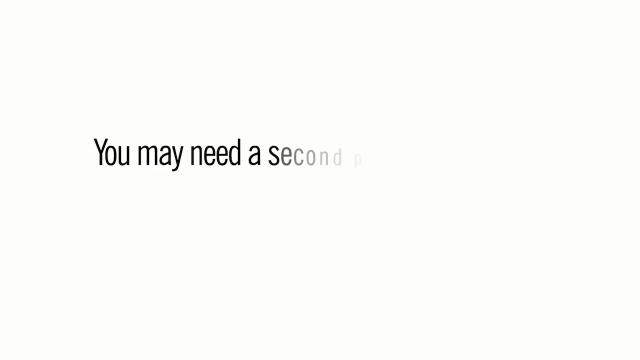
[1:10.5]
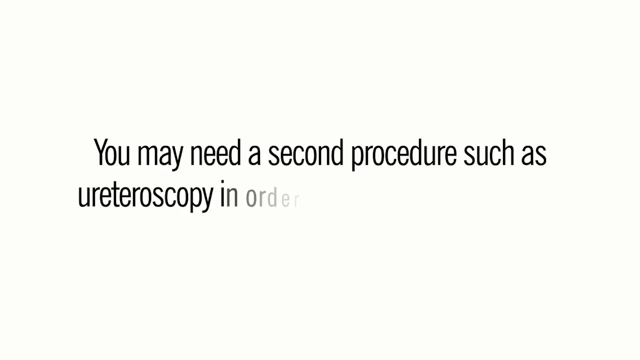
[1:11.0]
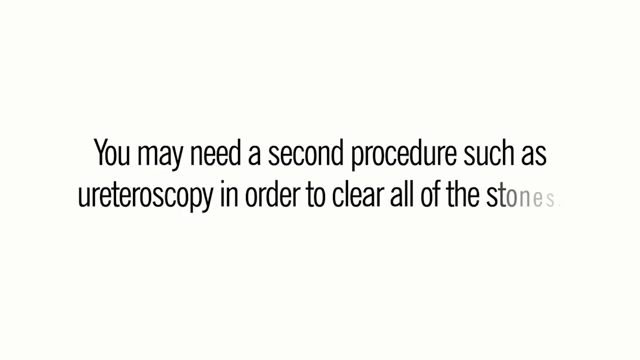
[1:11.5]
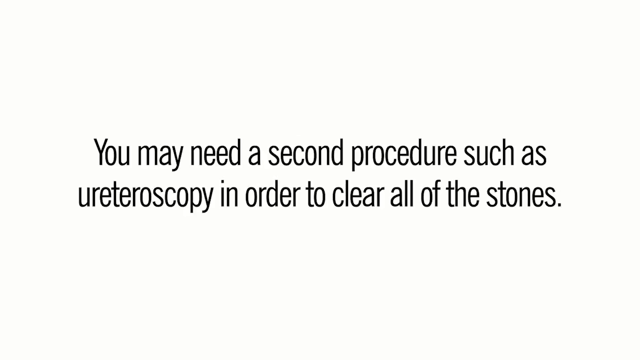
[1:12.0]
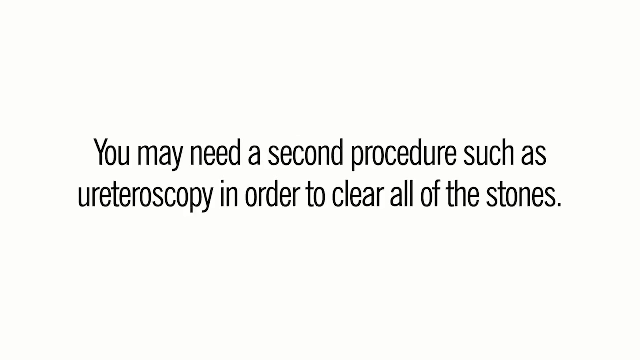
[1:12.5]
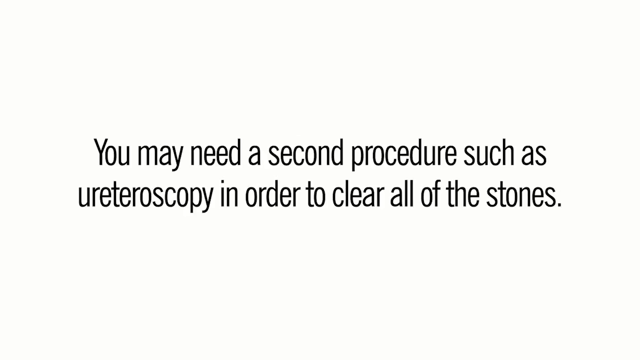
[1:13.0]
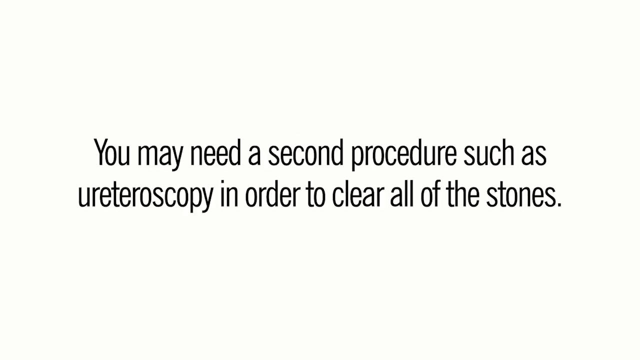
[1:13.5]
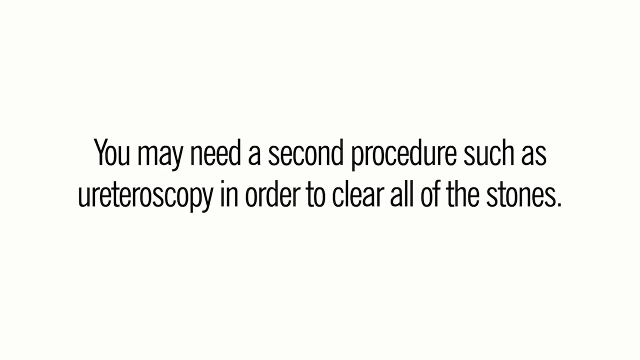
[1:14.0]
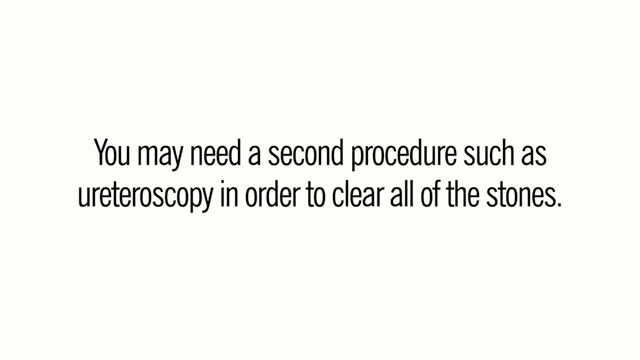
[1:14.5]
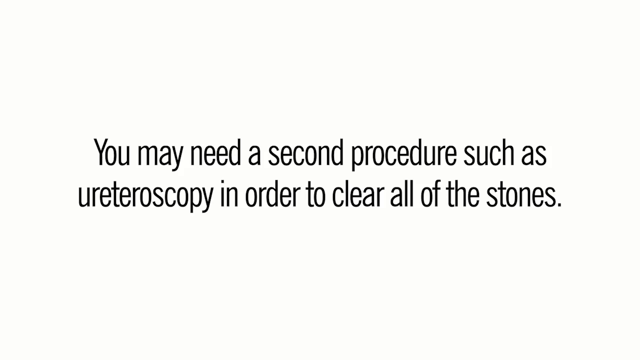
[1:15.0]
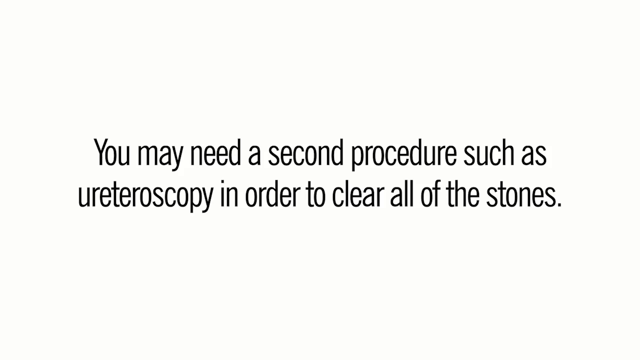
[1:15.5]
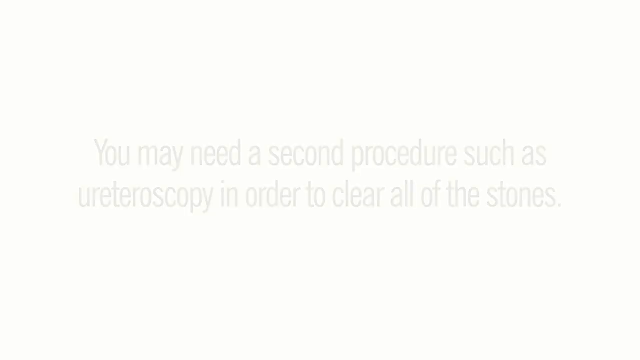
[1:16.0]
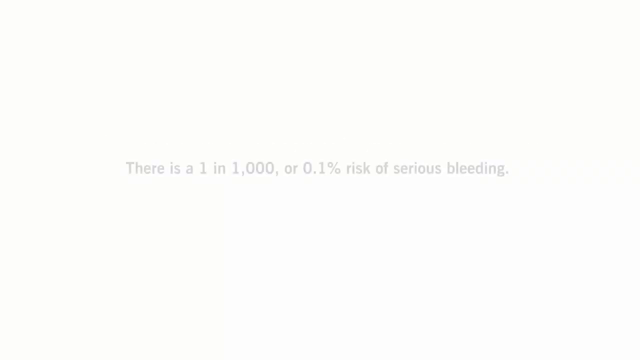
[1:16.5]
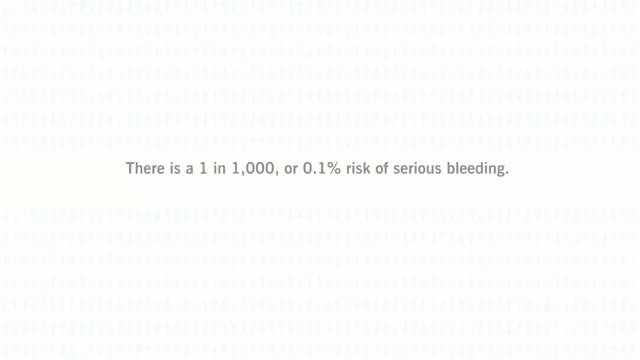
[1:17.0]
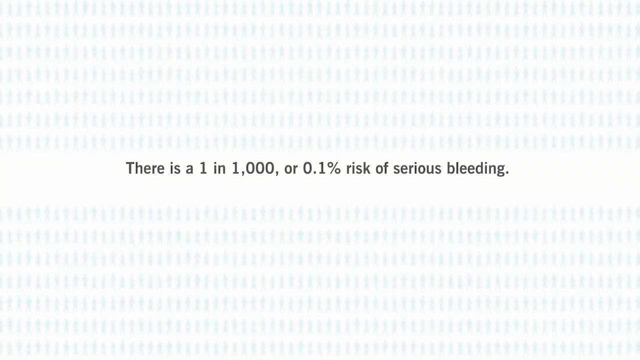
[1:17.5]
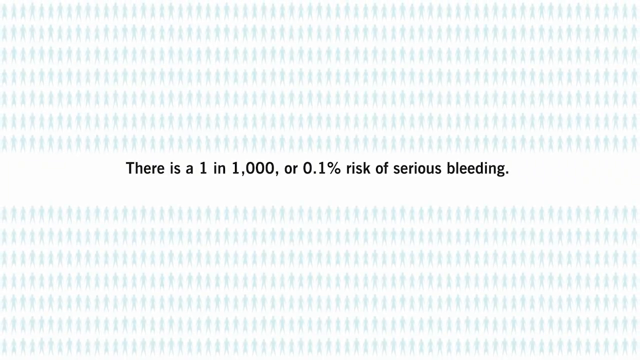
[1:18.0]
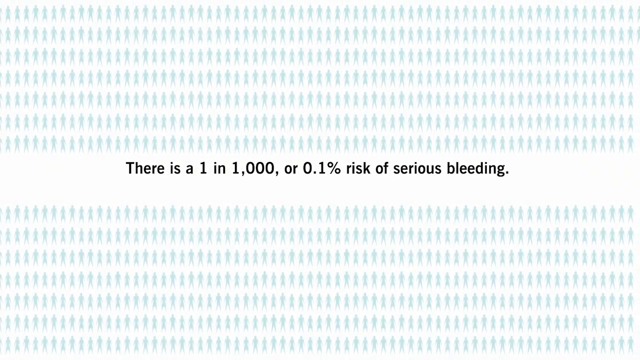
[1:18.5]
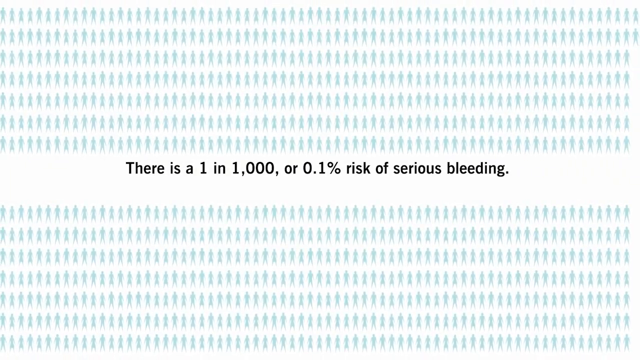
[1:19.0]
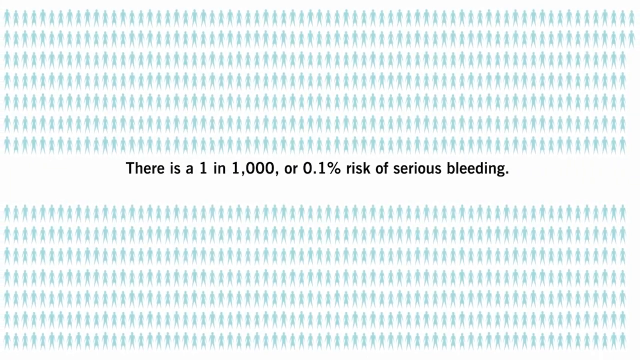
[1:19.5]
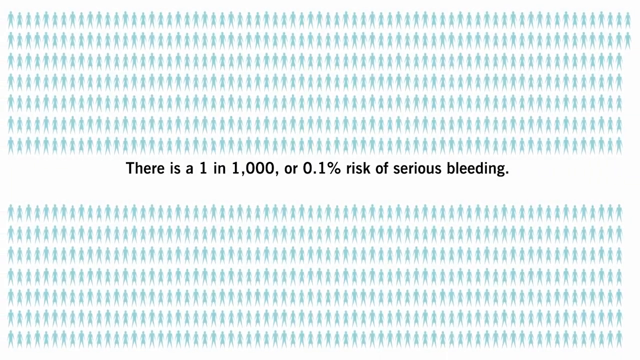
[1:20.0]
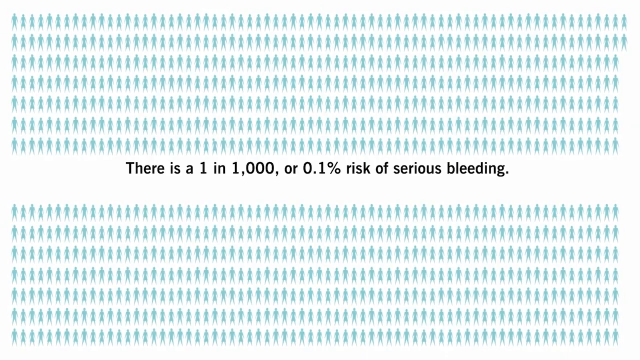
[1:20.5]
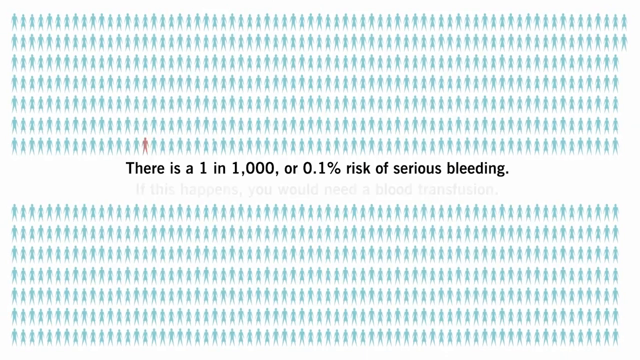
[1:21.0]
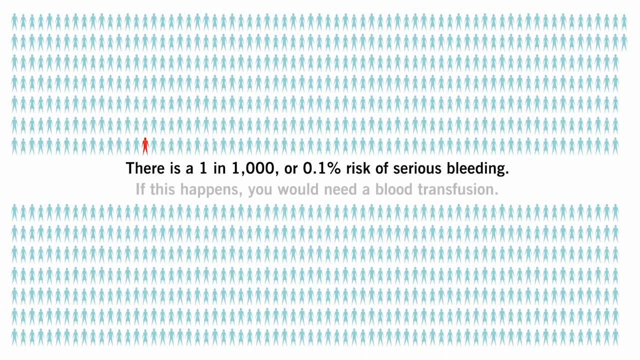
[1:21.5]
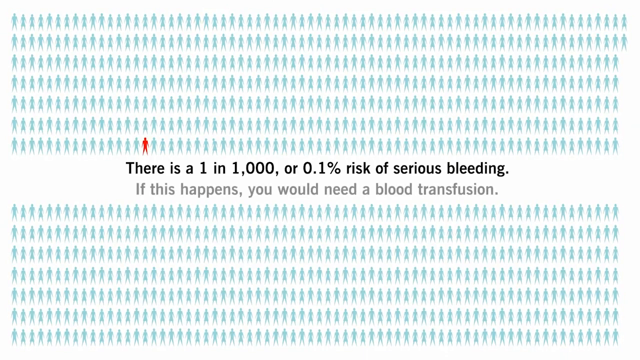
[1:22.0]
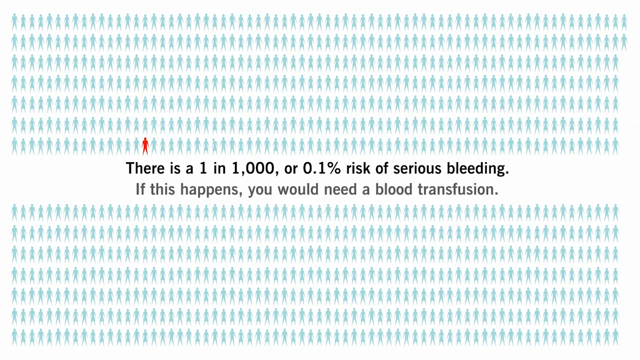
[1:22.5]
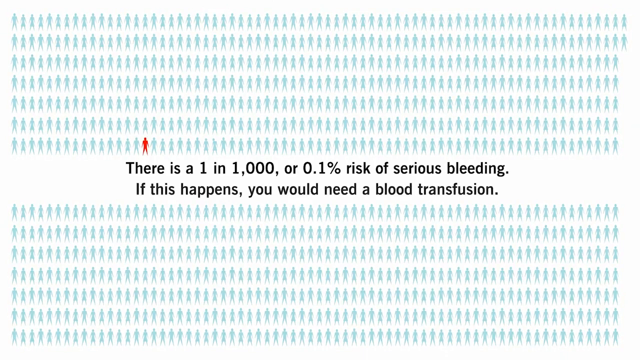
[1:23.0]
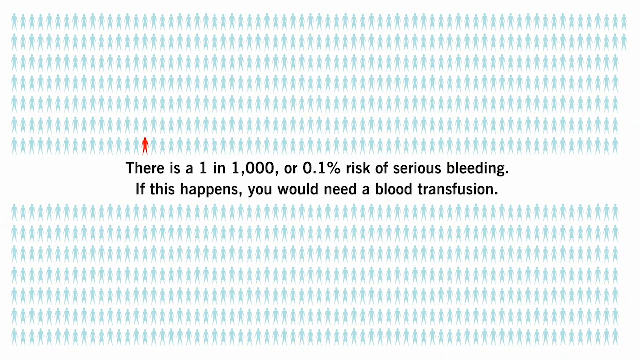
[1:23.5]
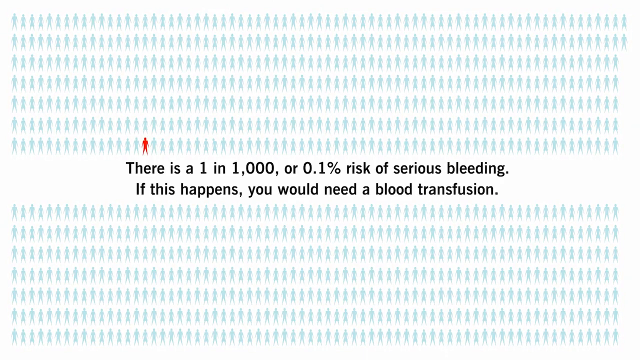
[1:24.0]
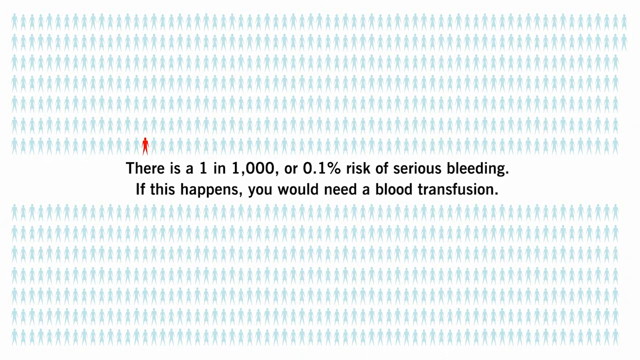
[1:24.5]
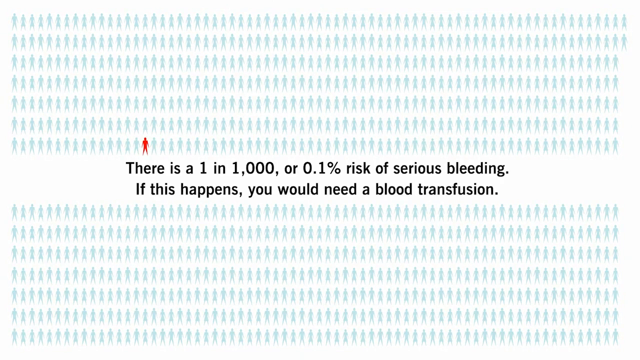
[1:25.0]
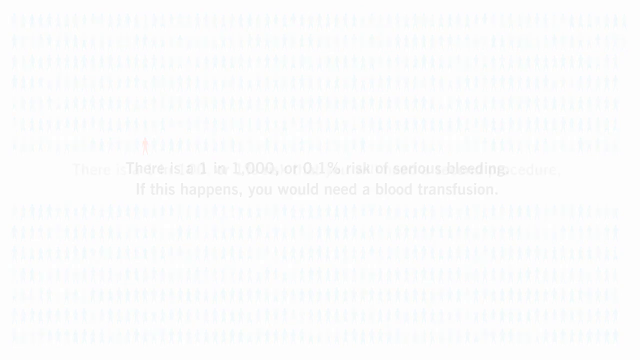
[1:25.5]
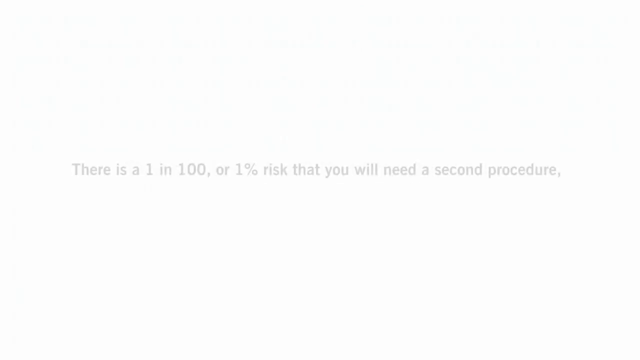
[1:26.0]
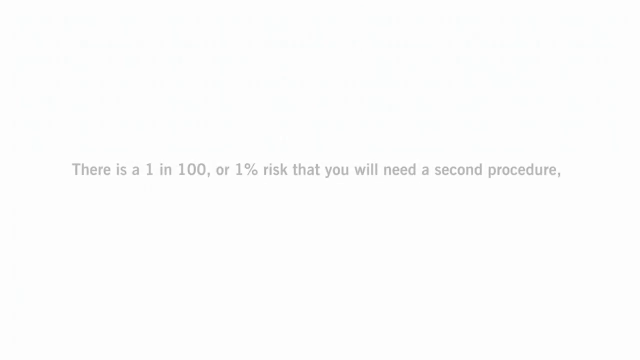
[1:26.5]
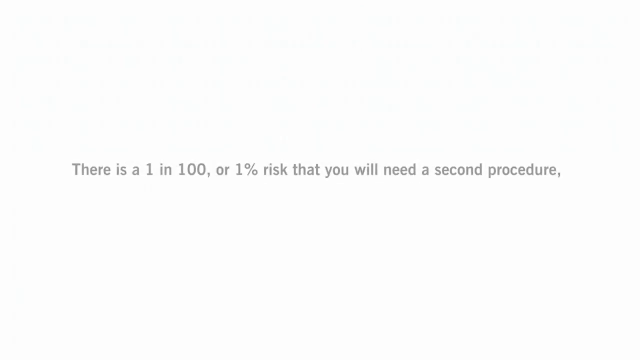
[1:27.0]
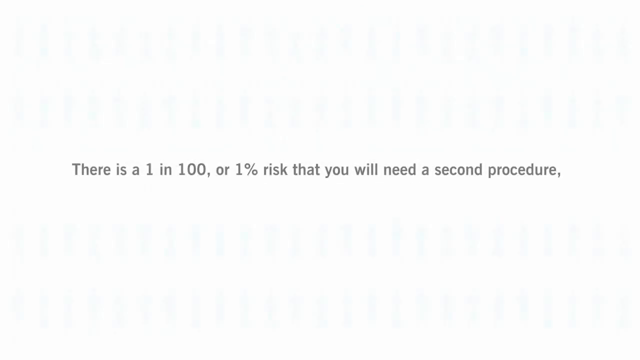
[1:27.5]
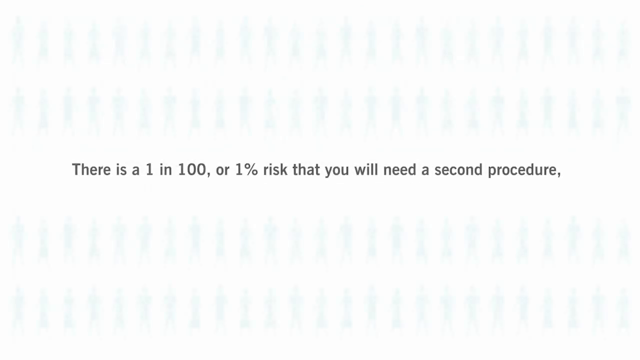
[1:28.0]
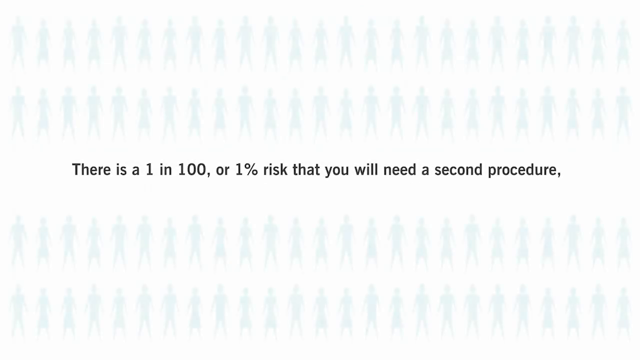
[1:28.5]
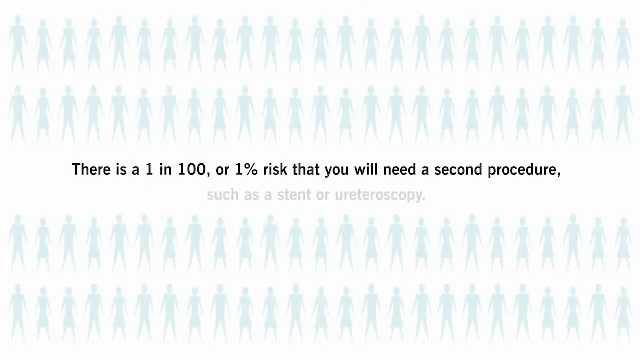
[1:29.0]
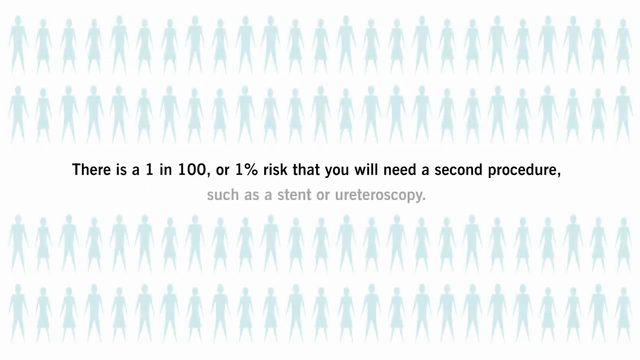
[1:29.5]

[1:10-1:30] Black text on a white background reads: "you may need a second procedure, such as ureteroscopy, in order to clear all the stones." Further text reads "There is 1 in 1,000 or 0.1% risk of serious bleeding. If this happens, you would need a blood transfusion" and "There is 1 in 100 or 1% risk that you will need a second procedure, such as a stent or ureteroscopy." Alongside the percentages, pictures of dressed human bodies run across the top and bottom of the text, giving a visual image of the number of people at risk versus the number not at risk.